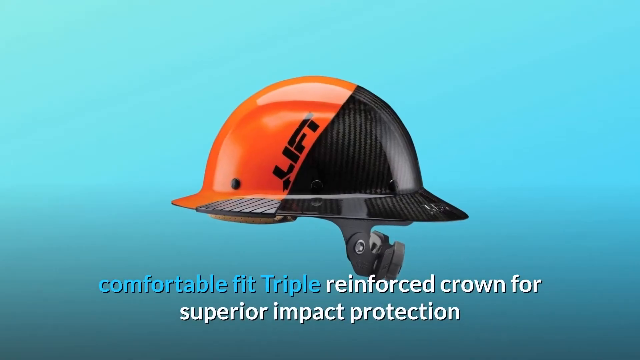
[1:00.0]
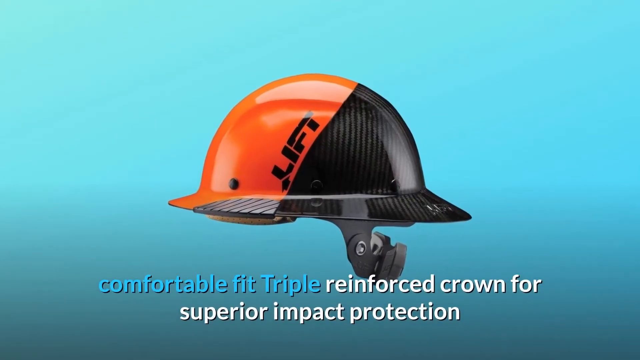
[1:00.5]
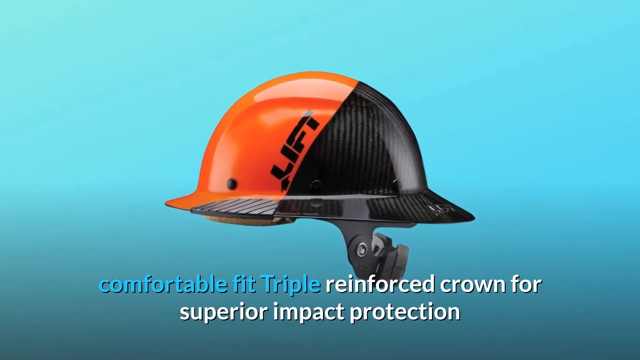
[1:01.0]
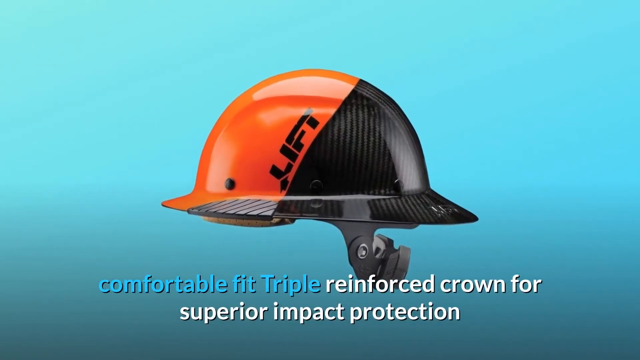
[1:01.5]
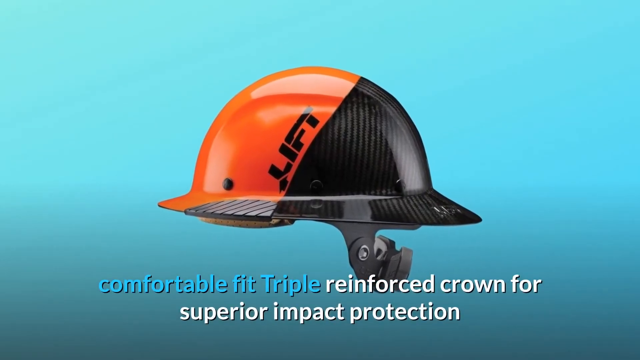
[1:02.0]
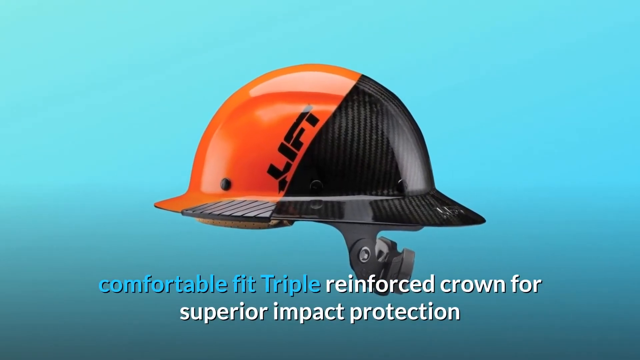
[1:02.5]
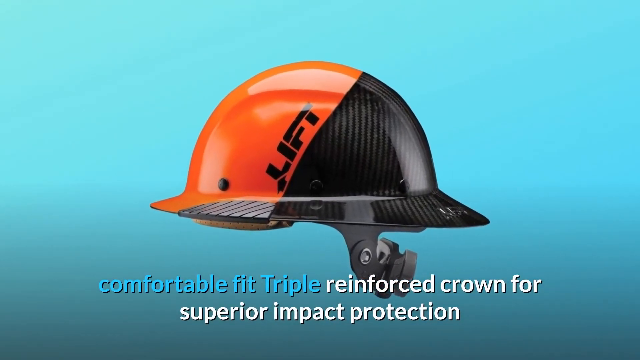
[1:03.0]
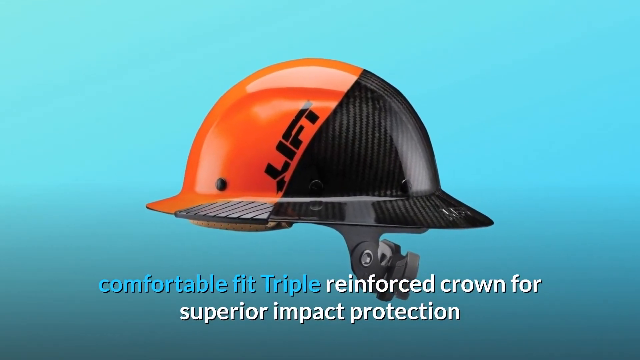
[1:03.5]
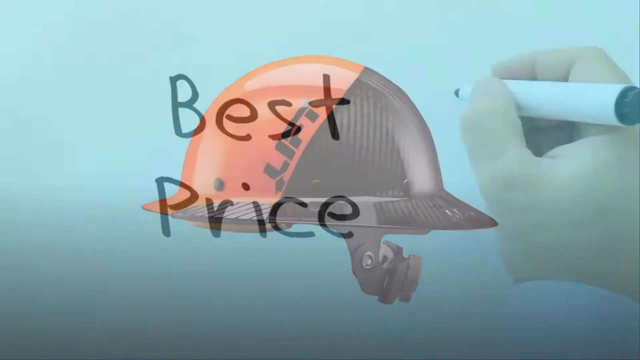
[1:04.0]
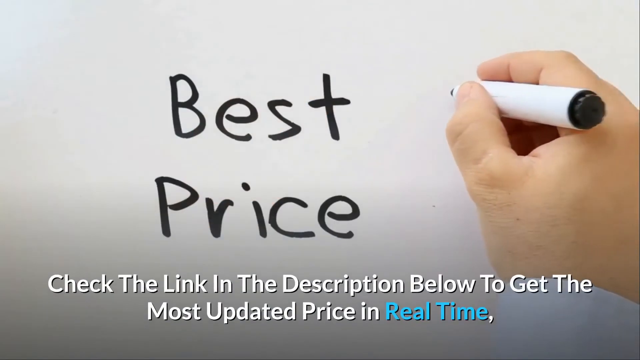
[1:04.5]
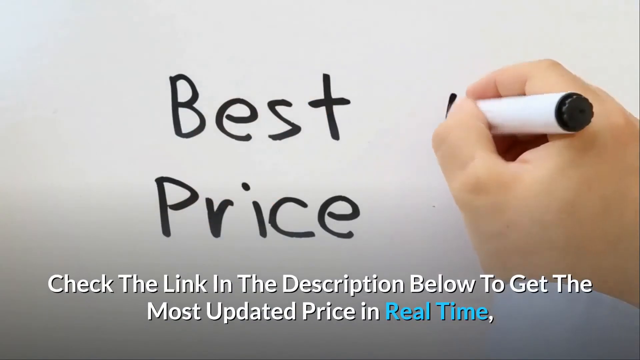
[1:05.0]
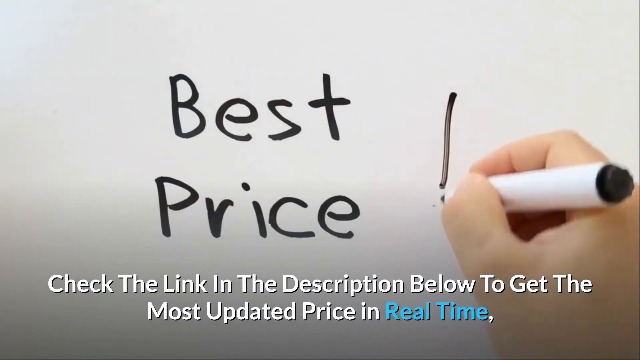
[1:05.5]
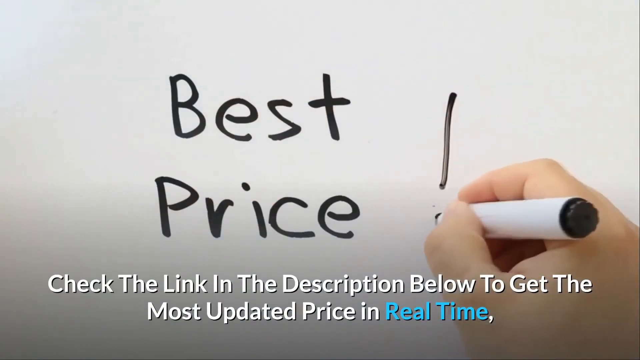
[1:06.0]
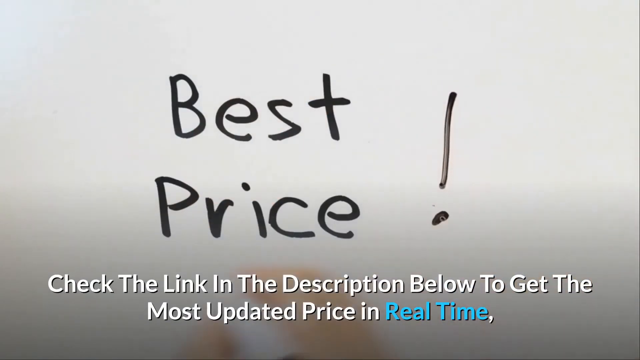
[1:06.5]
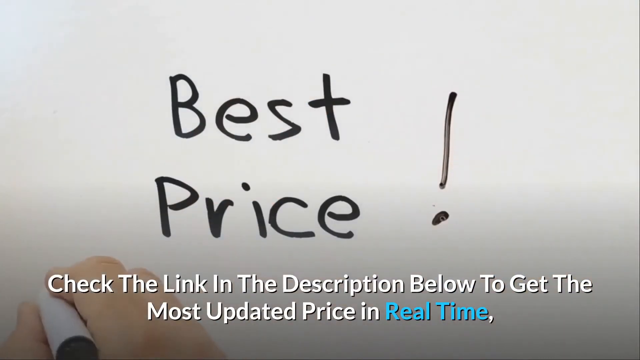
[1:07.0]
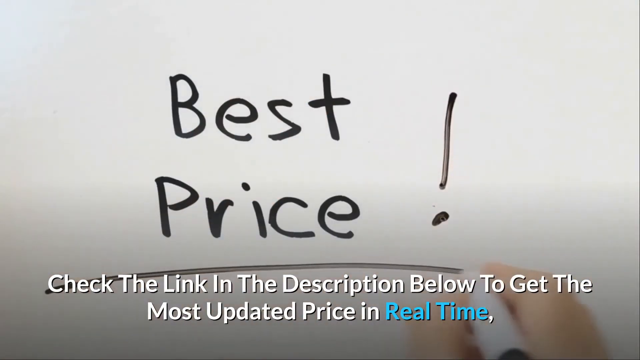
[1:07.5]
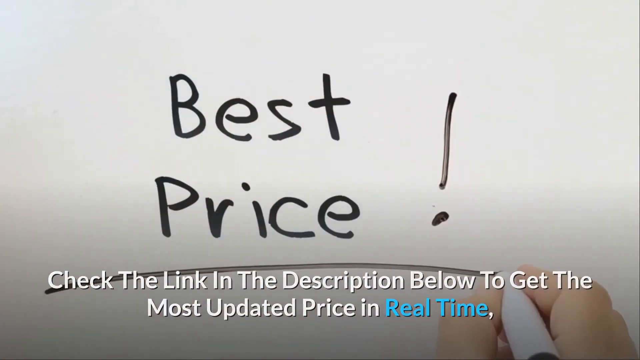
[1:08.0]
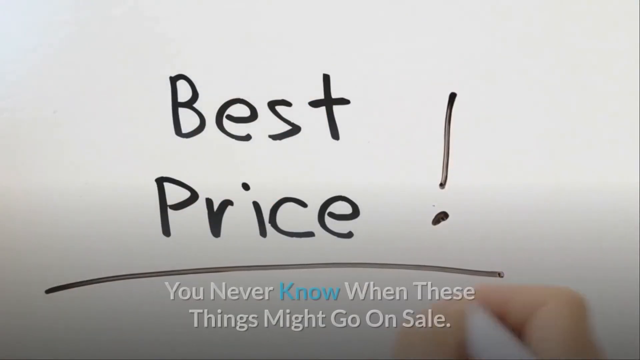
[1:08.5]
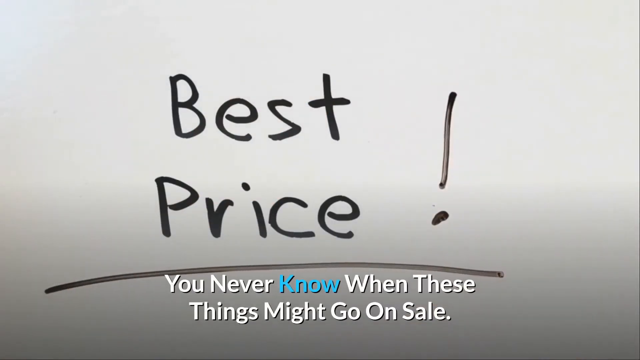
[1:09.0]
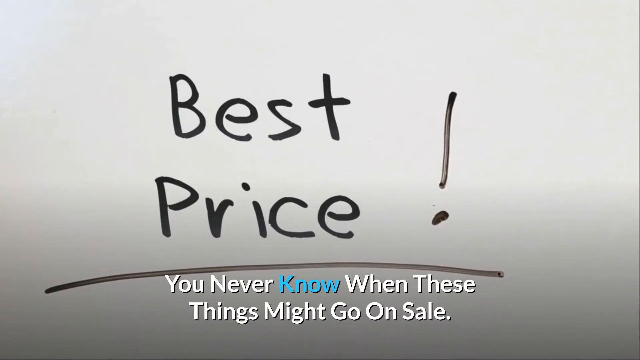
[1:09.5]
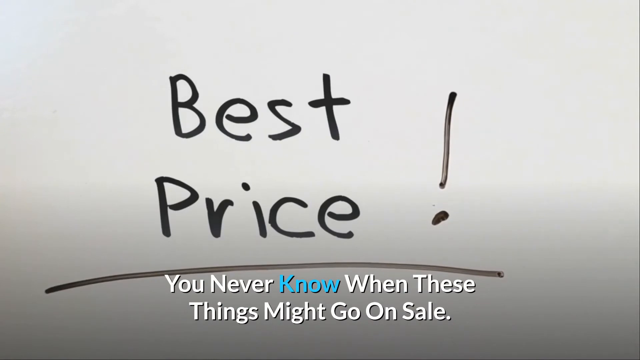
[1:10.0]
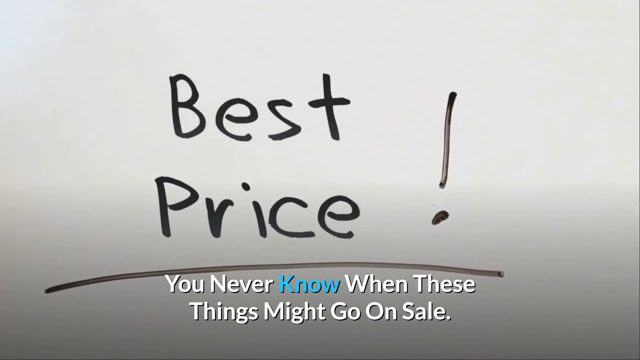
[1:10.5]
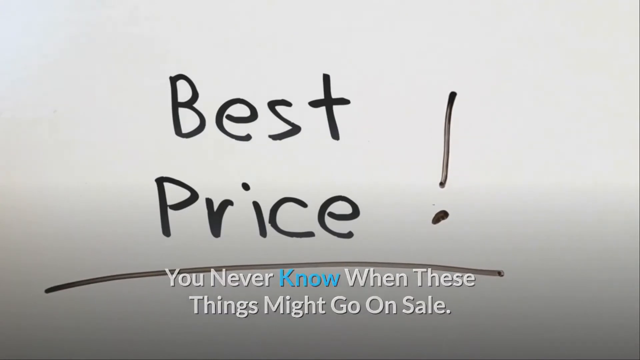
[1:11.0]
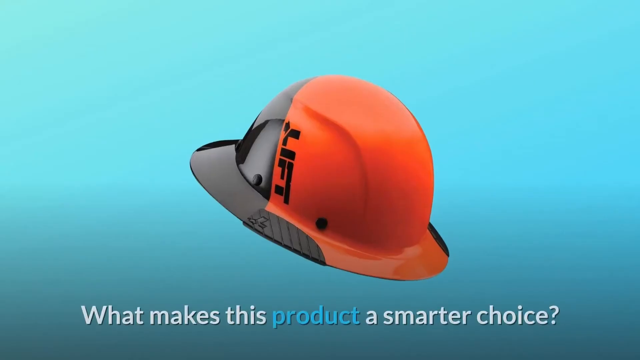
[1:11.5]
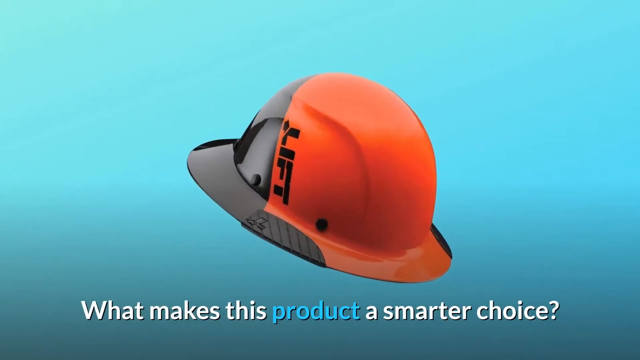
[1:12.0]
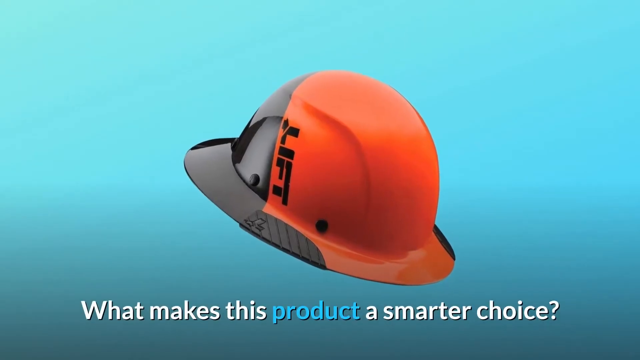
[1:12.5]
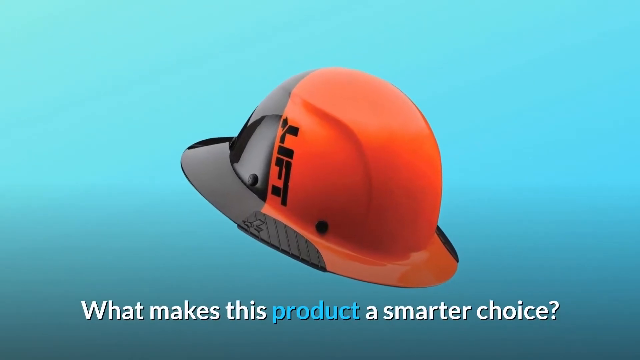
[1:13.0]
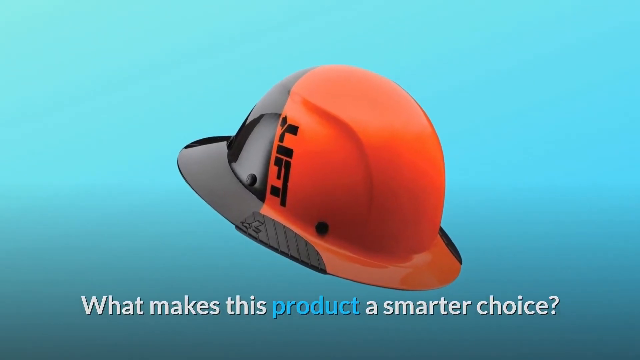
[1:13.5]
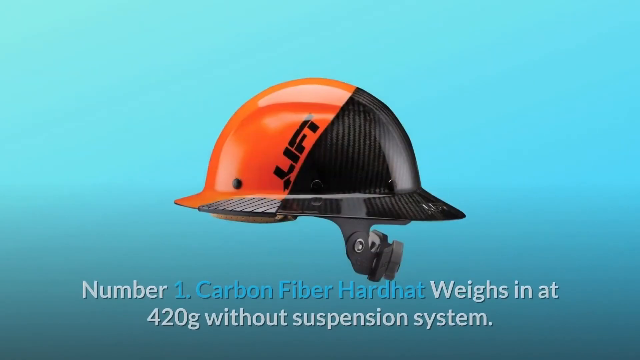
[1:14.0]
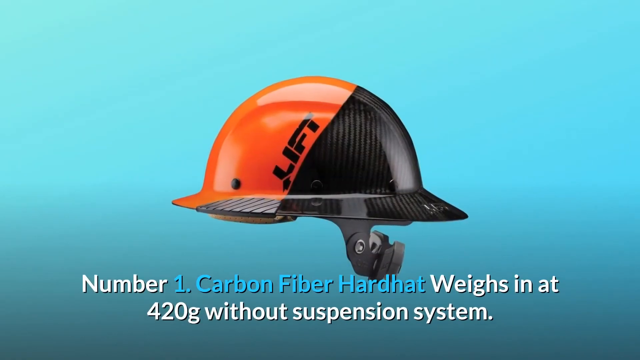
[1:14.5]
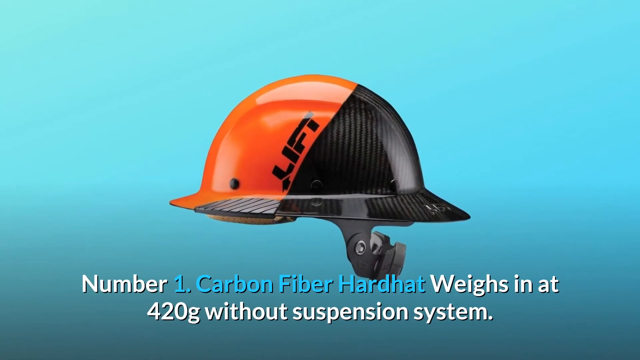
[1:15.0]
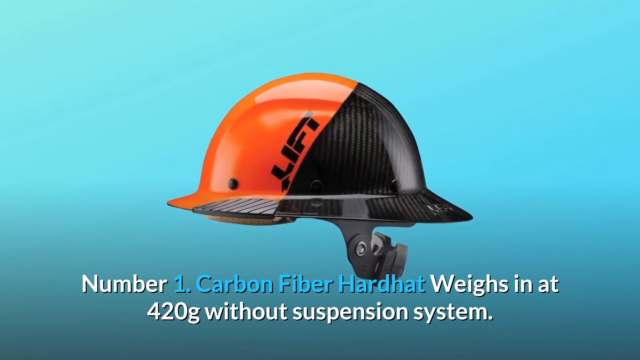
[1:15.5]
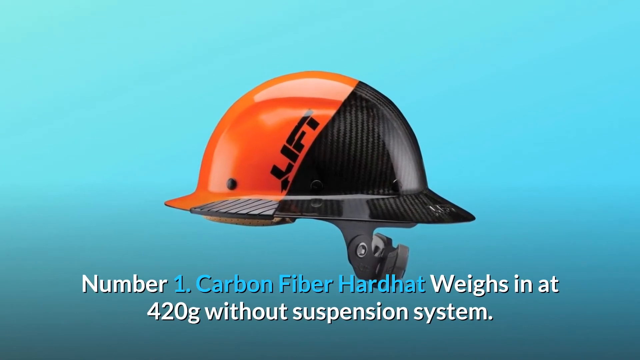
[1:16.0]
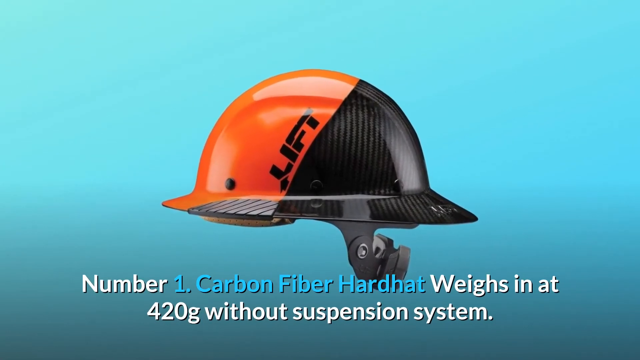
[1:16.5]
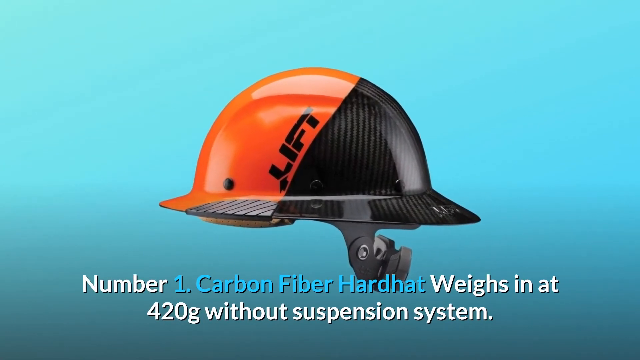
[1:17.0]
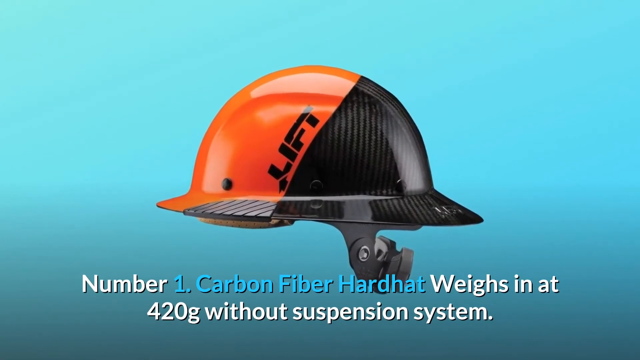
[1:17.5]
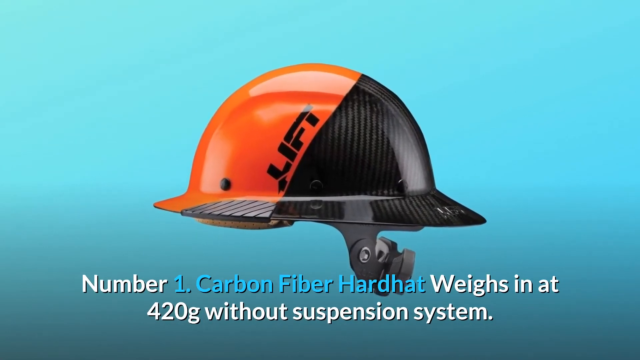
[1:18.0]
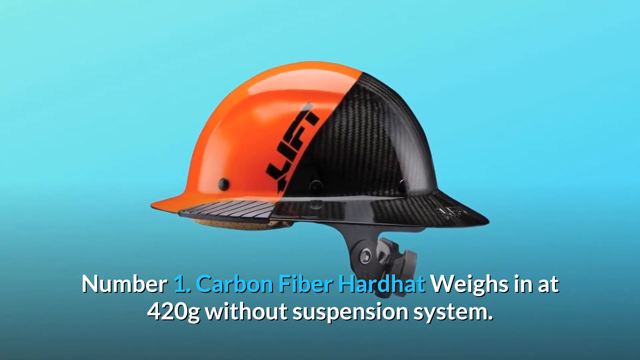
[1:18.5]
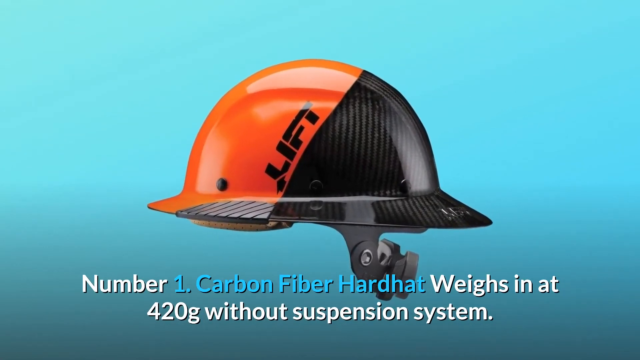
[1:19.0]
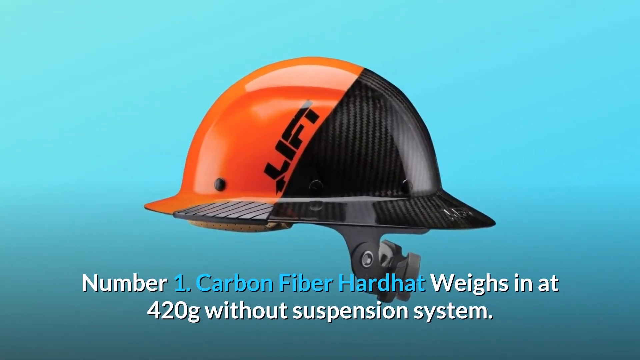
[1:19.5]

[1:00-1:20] Captions about the hard hat continue. Then a black marker writes on either a whiteboard or a piece of paper, spelling out the words "best price" with a large exclamation point. Text underneath says "check the link in the description below to get the most updated price in real time." The marker then underlines "best price," and text says "you never know when these things might go on sale." A picture of the hard hat shown earlier appears, with the question "What makes this product a smarter choice?" underneath. The video seems to answer the question, with text saying "number 1, carbon fiber hard hat weighs in at 420 grams without suspension system." A new caption appears on screen before being cut off.